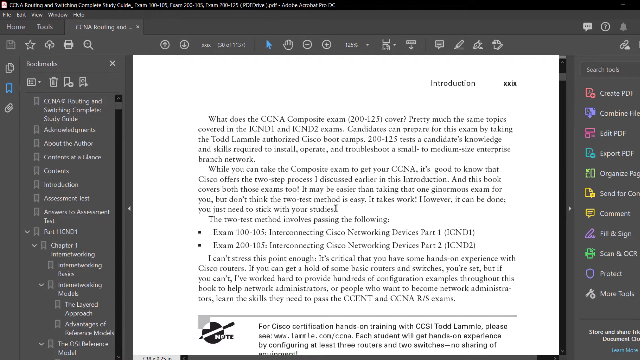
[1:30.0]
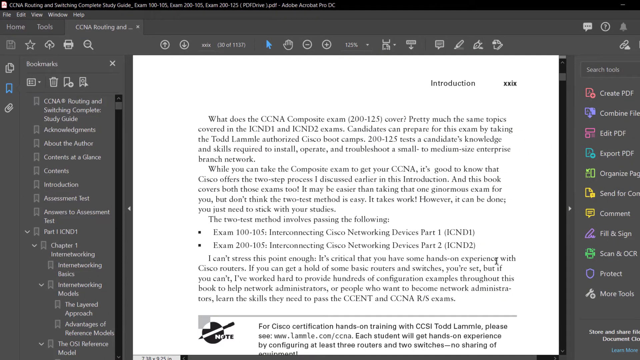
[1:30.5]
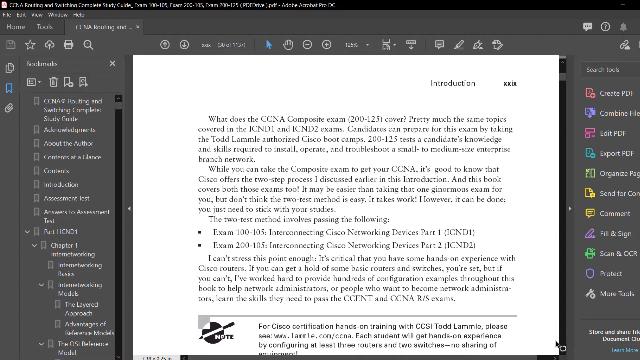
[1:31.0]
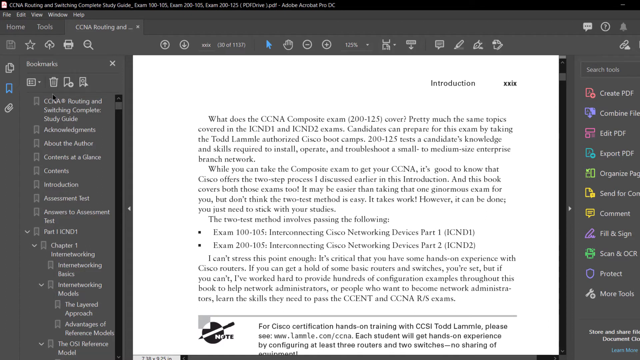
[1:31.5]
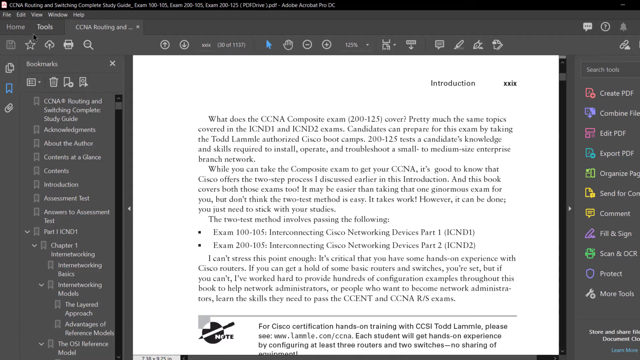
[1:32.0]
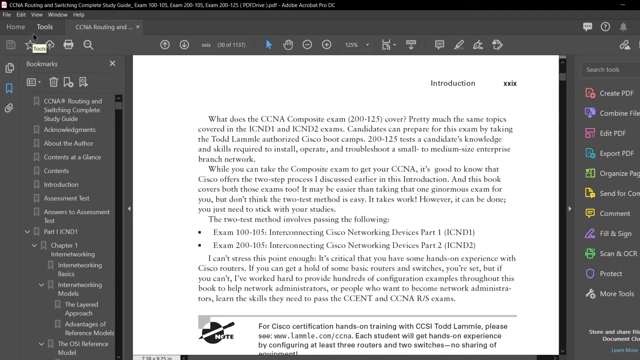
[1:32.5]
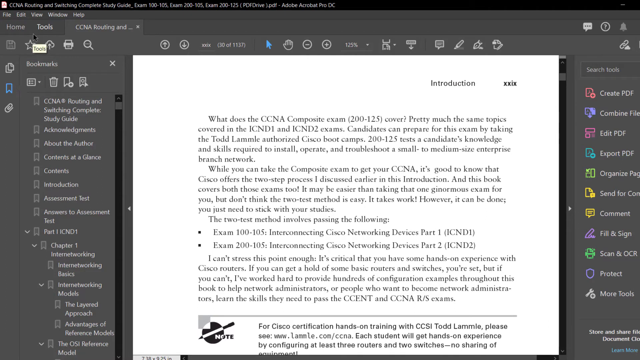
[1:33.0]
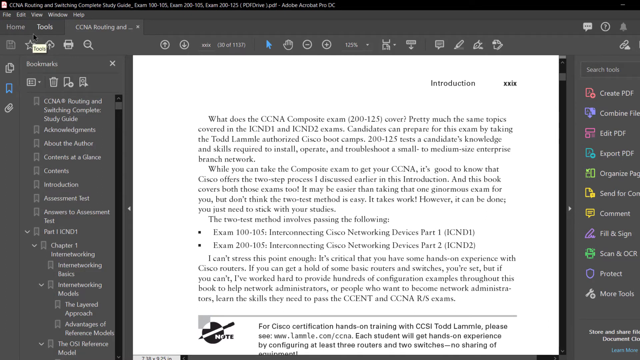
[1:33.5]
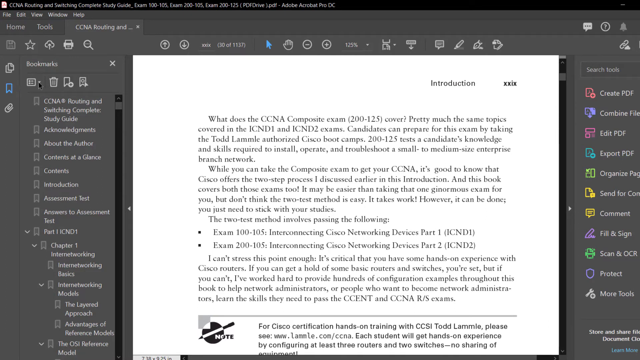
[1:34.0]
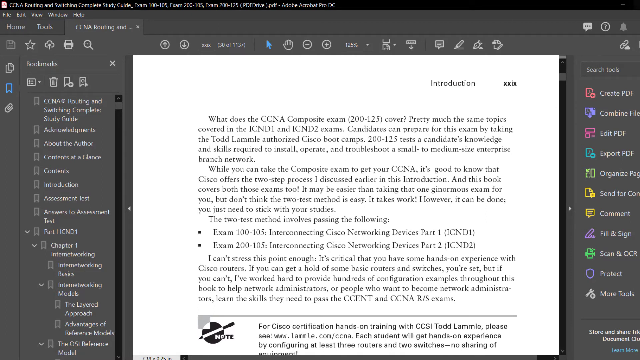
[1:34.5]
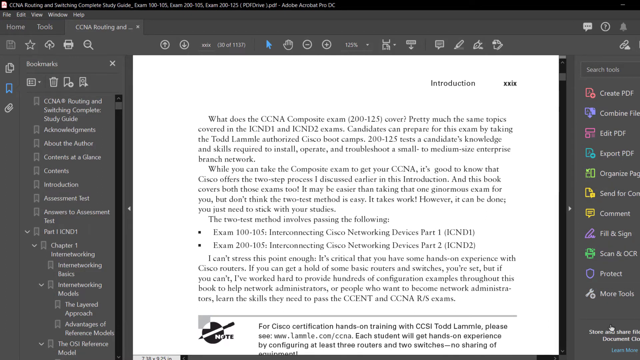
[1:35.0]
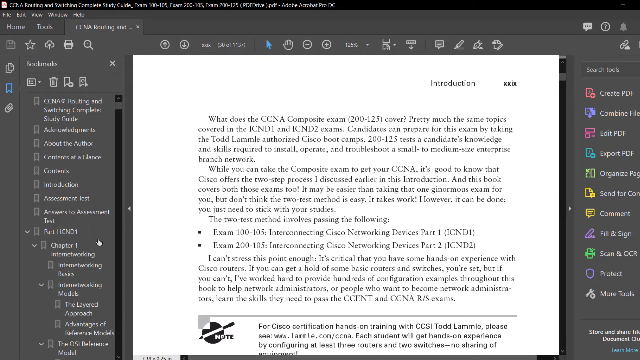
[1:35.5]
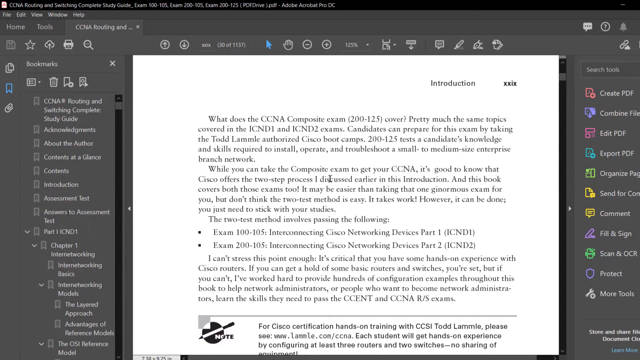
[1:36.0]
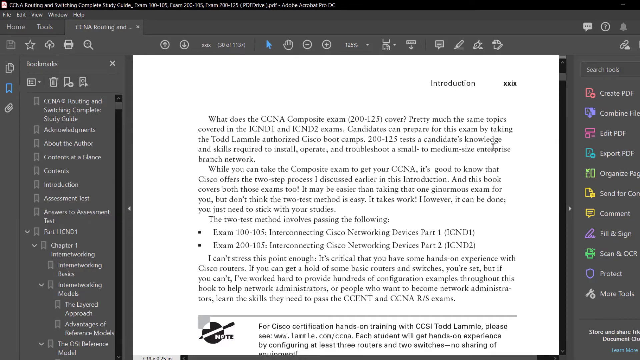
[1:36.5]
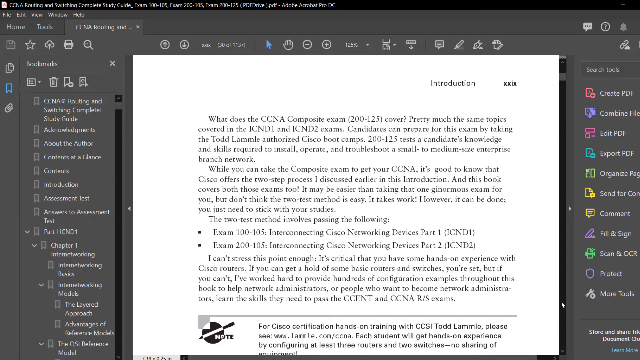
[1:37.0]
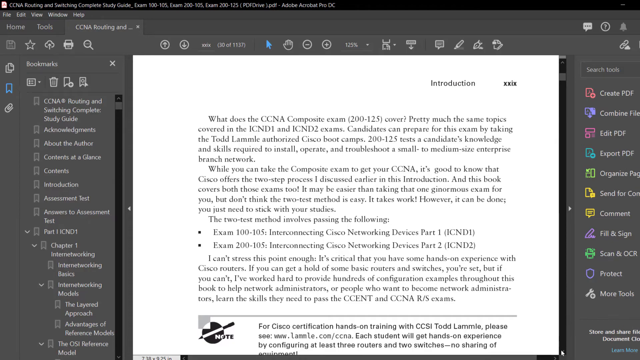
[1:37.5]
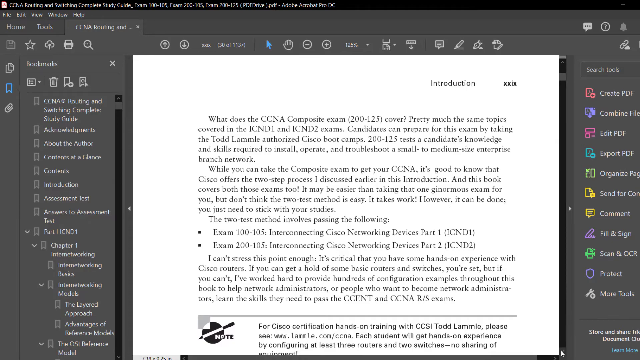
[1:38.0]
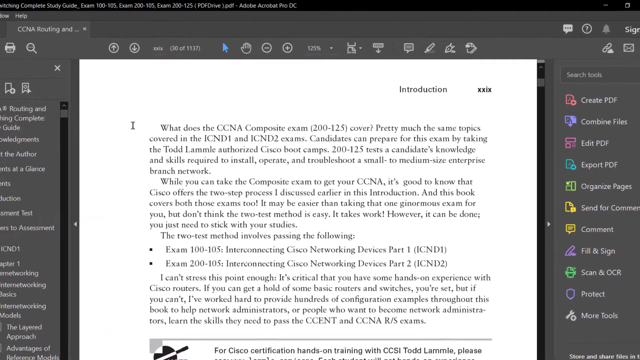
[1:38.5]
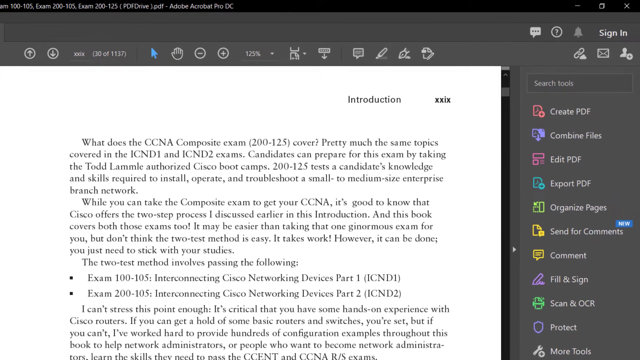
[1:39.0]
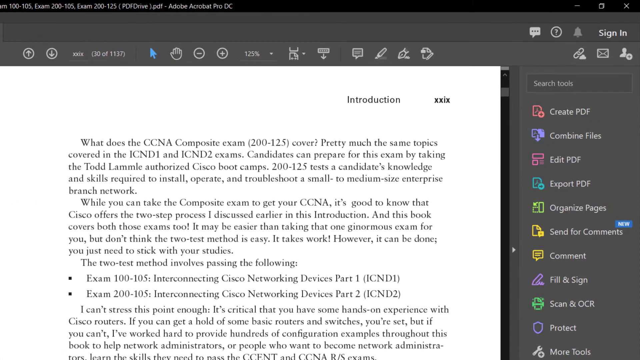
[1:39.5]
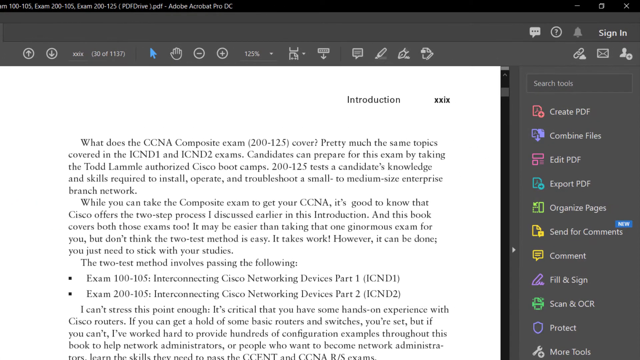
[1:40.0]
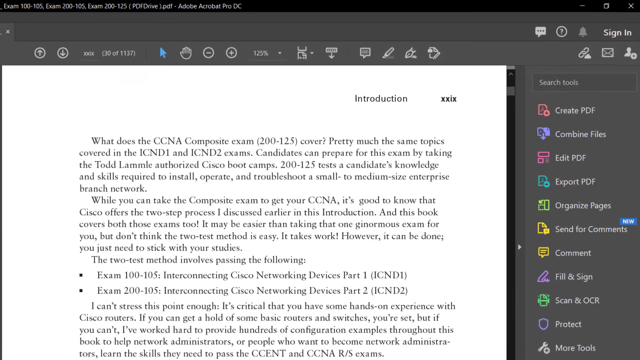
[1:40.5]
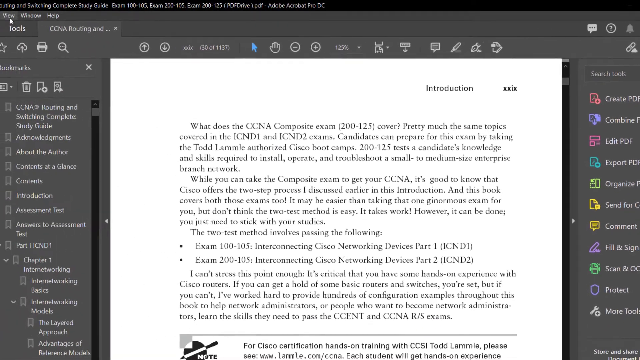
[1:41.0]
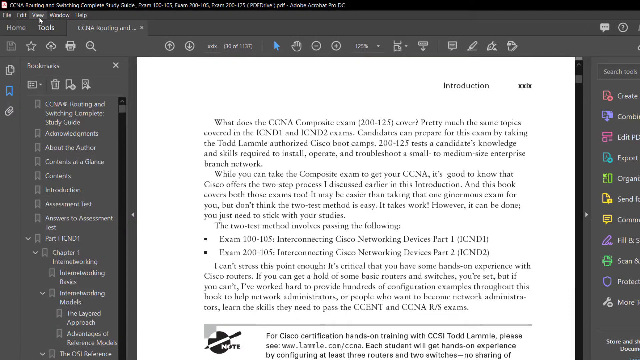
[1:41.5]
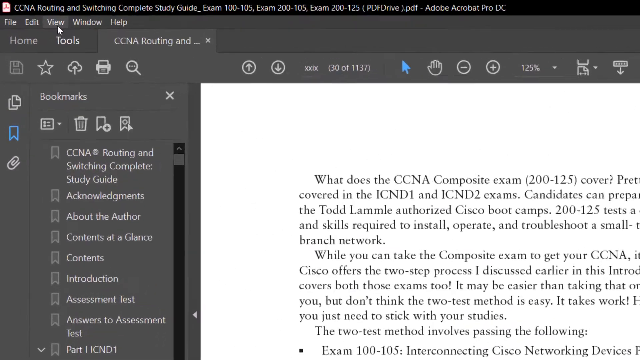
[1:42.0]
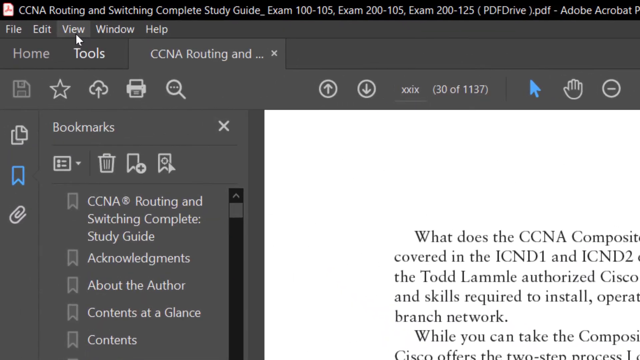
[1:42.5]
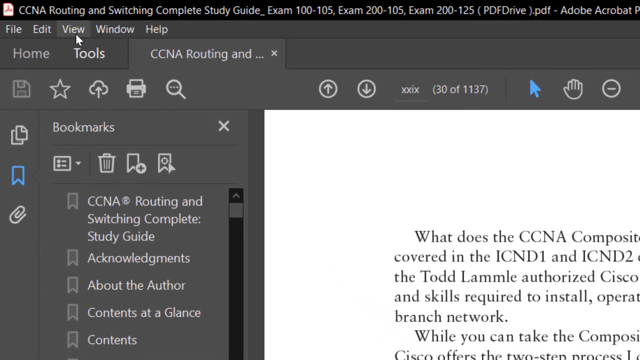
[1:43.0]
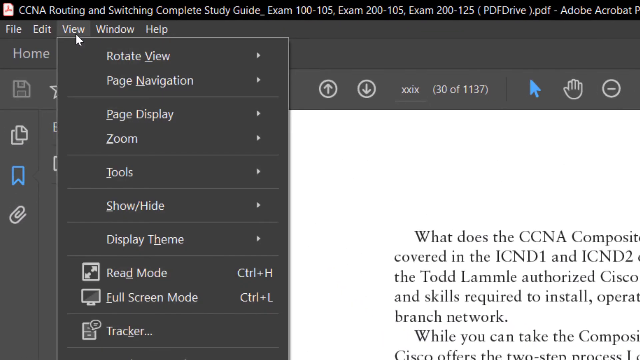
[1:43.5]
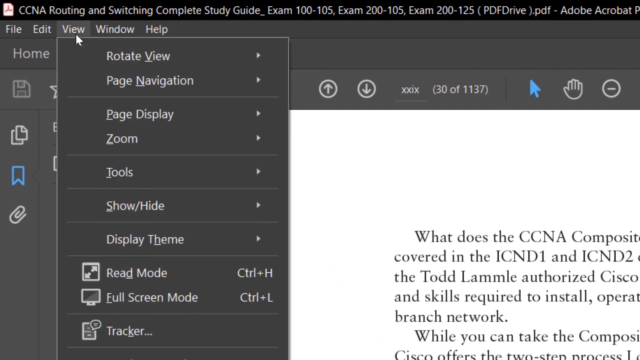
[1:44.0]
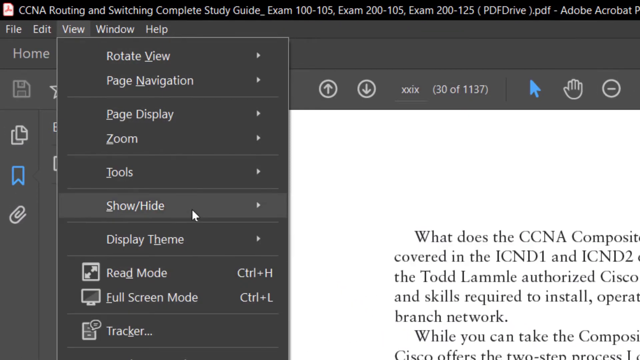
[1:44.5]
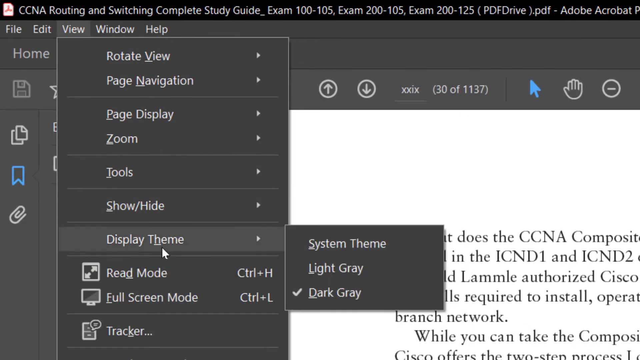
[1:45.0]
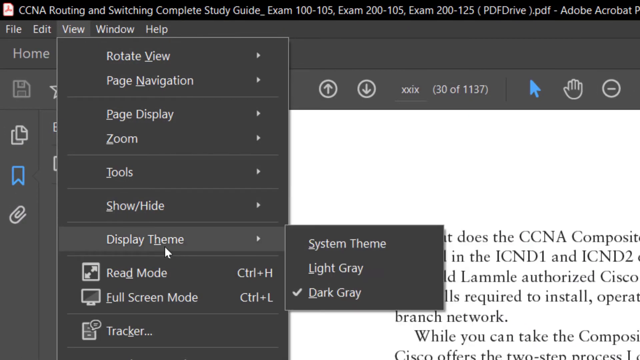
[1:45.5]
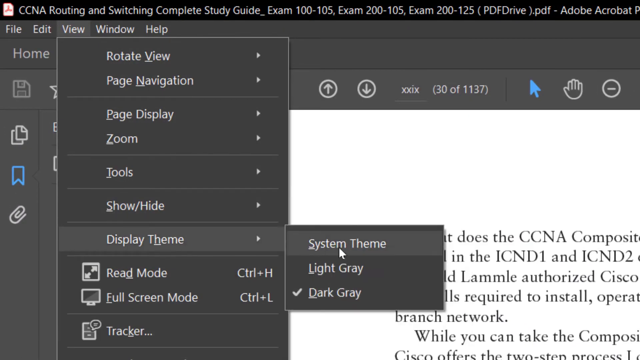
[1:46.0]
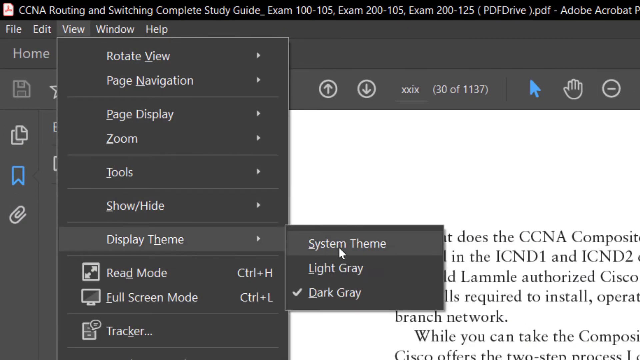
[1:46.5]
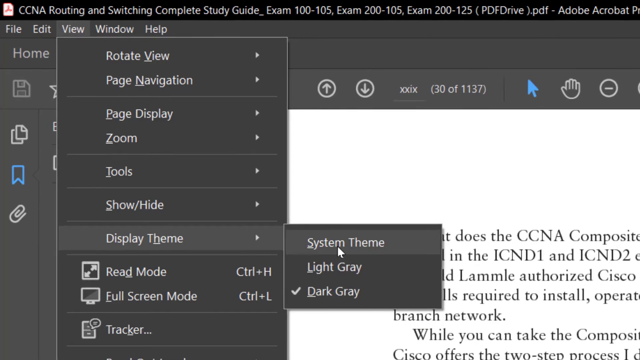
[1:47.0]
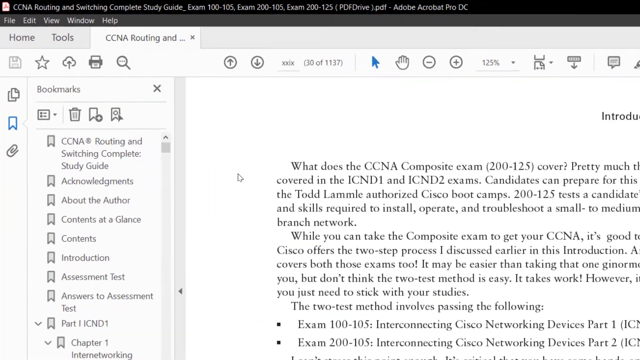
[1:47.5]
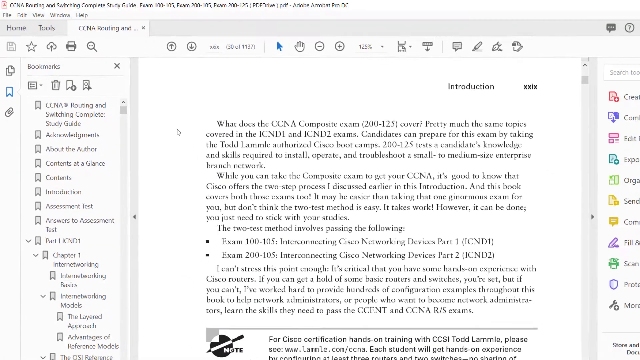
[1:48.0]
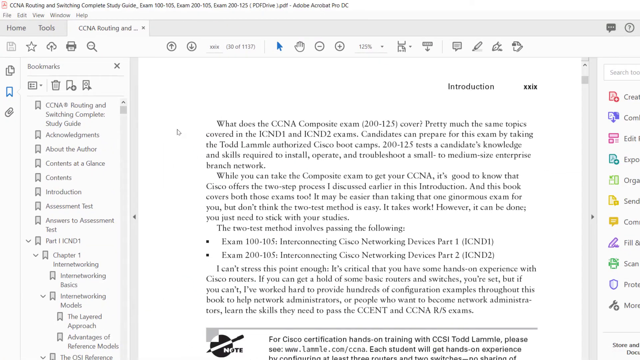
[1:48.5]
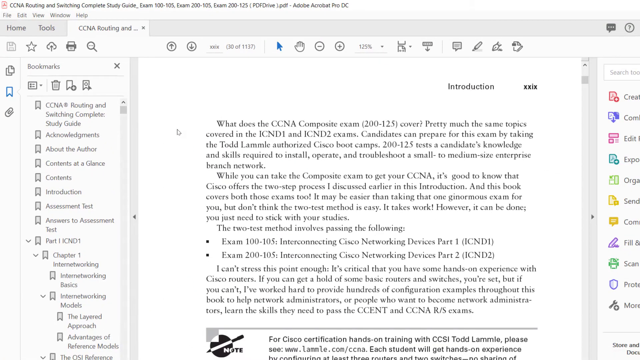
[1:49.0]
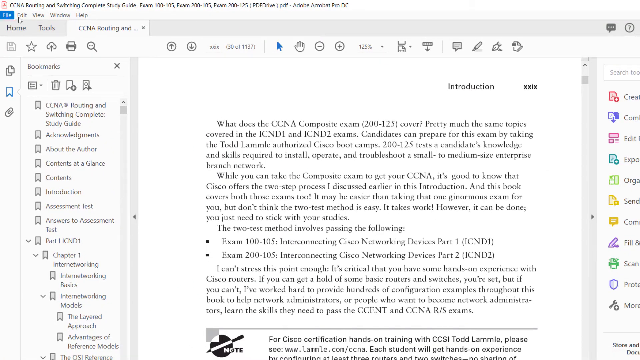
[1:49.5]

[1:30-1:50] On the dark gray screen, the view zooms in on the right side of the page, where the buttons now have neon colors: an orange neon symbol with "create PDF" in white text next to it, a purple neon picture below it labeled "combine files," and more symbols in neon greens, yellows and purples. Zoomed in, a blue box with white text reading "new" is visible right above the letters T and S in "comments" where it says "send for comments." The view then moves to the left side of the screen, where the pointer clicks the view button, goes down to the display theme menu and clicks "system theme," which turns the screen white again.